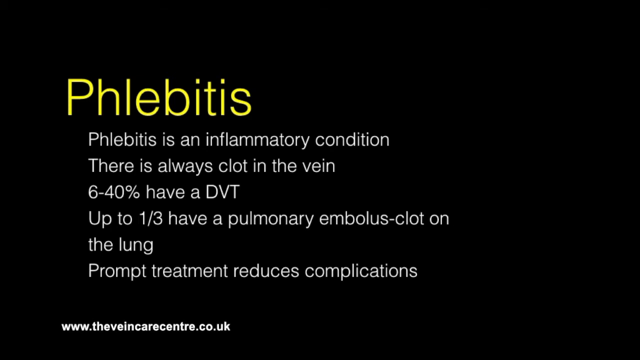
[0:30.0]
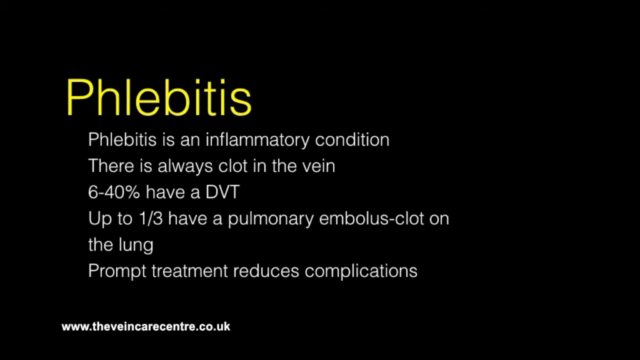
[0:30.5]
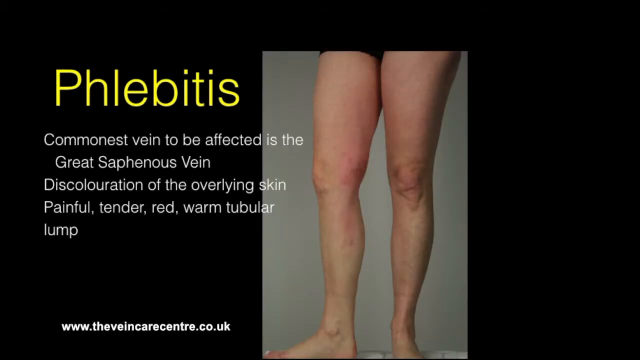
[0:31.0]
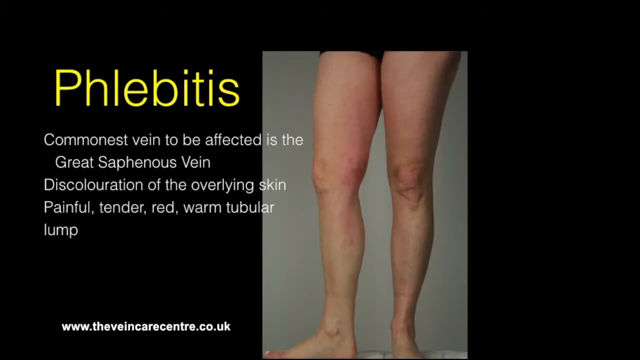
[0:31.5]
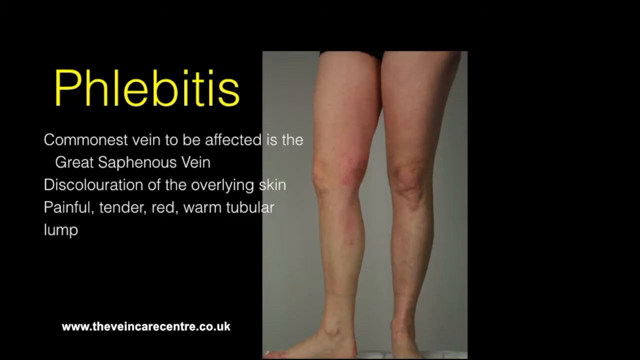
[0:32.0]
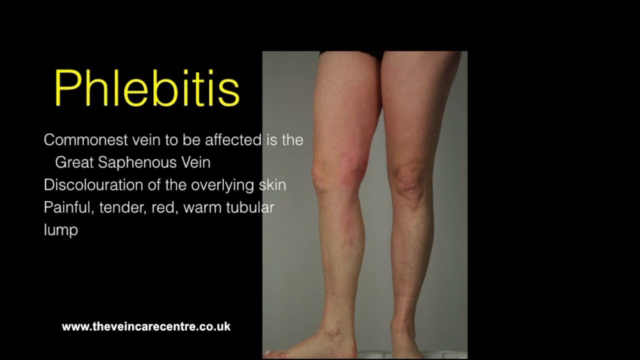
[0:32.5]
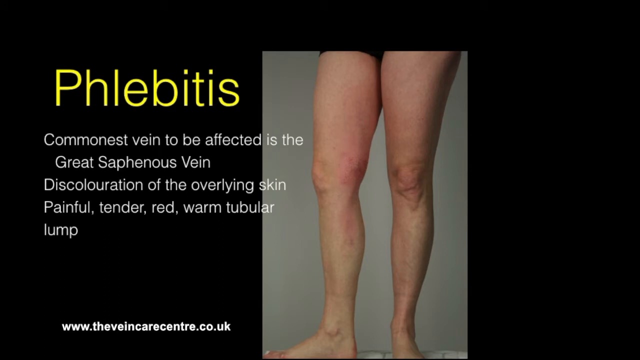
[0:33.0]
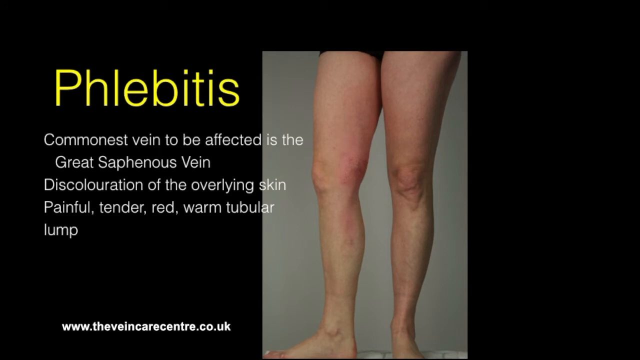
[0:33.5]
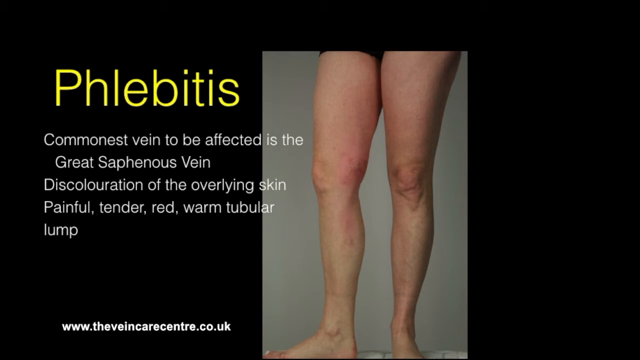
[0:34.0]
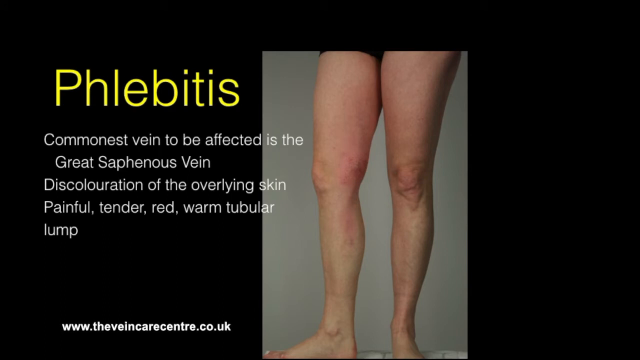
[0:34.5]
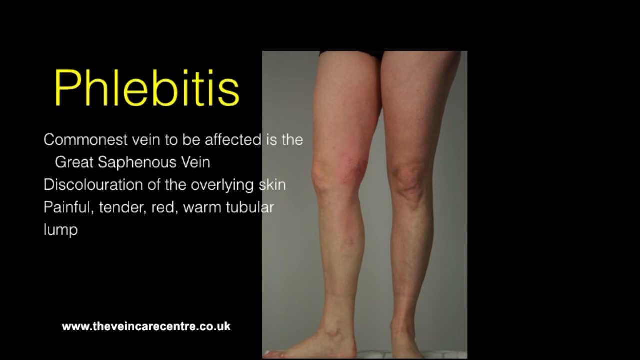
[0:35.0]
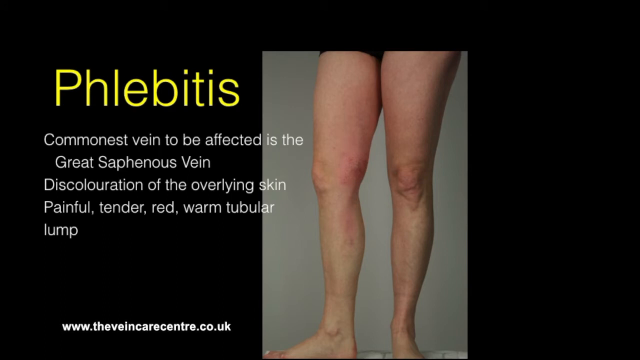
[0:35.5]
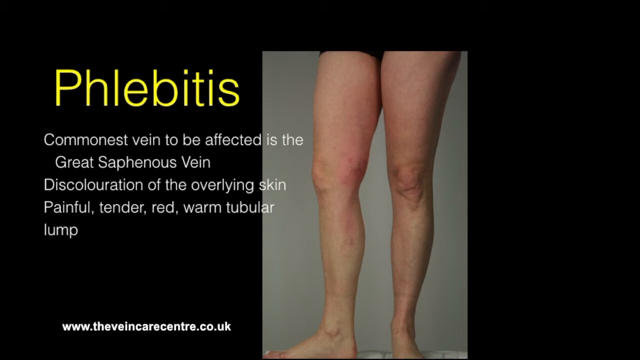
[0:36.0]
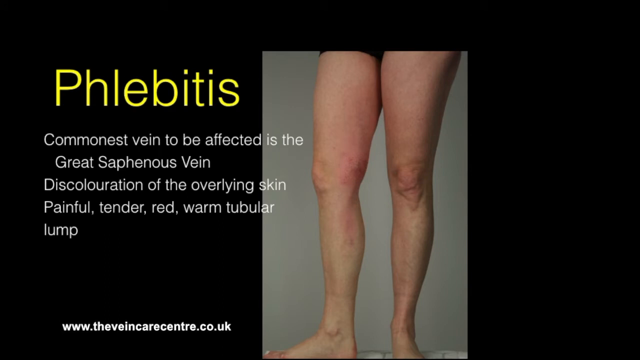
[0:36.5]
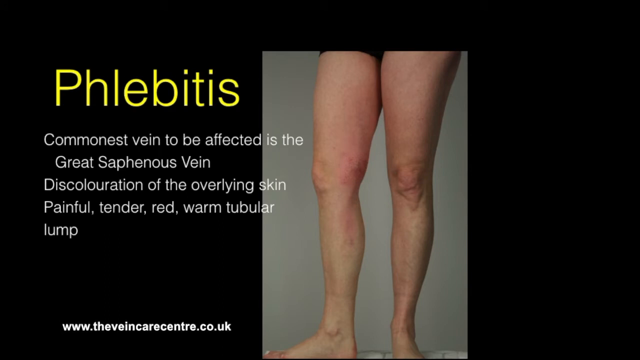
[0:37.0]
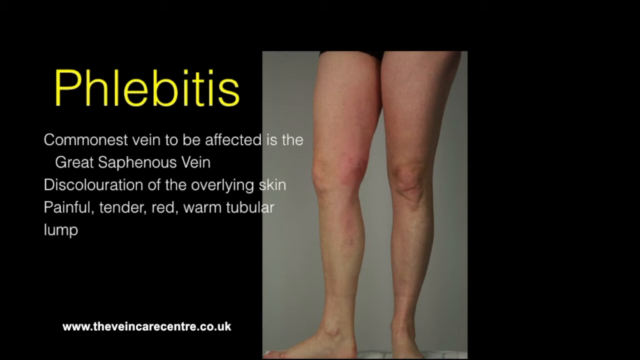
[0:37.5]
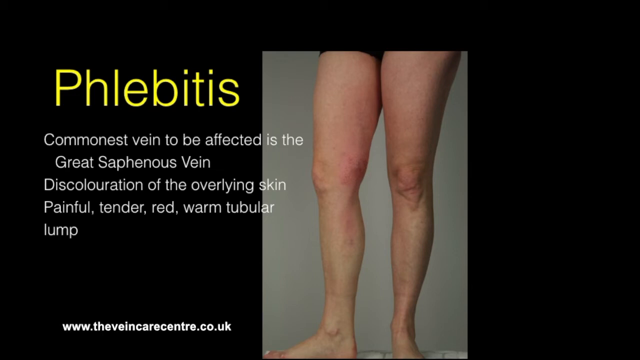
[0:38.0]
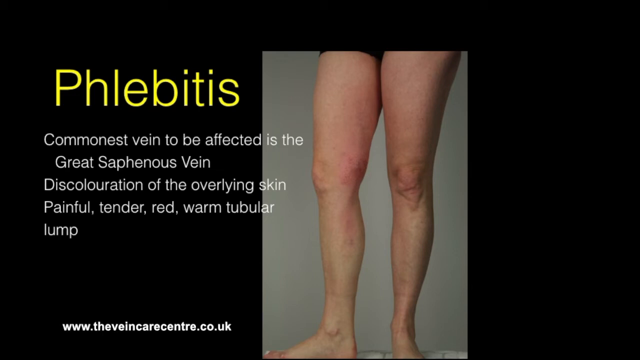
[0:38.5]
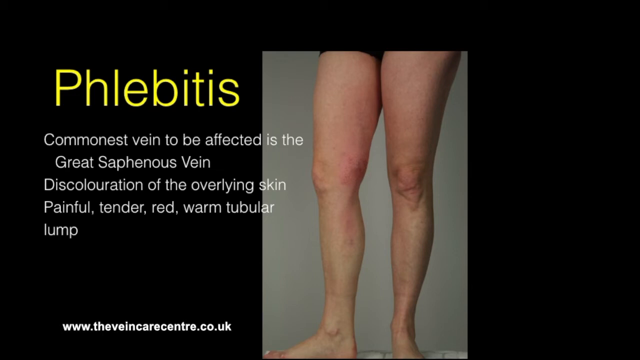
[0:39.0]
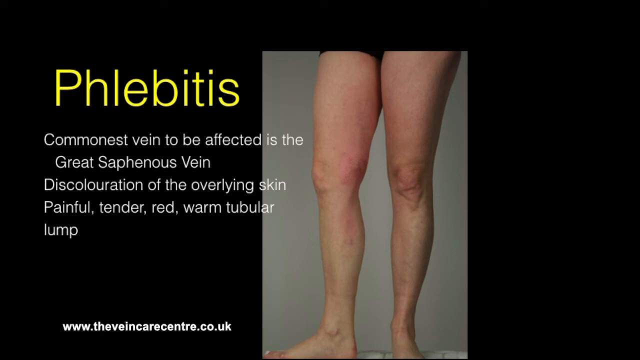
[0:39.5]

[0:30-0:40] The frame shows "phlebitis" in yellow, followed by a picture of someone's legs with the text "commonest vein to be affected is the great saphenous vein, discoloration of the overlying skin, painful, tender, red, warm, tubular lump." The video holds on that, then goes back to the description: "Phlebitis is an inflammatory condition, there is always a clot in the vein. Six to 40% have a DVT. Up to one third have a pulmonary embolus clot on the lung. Prompt treatment reduces complications." It then switches to the picture with the legs and goes back.